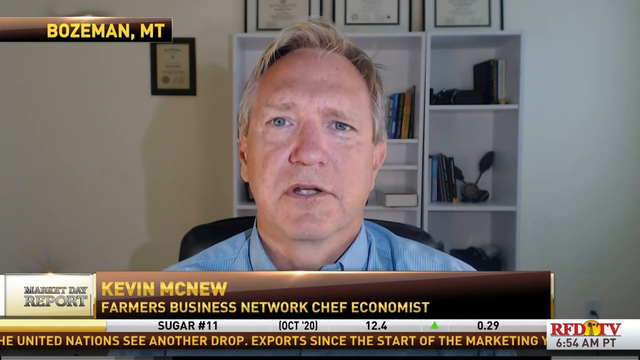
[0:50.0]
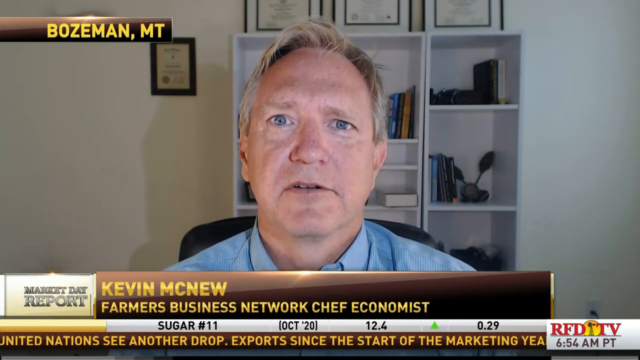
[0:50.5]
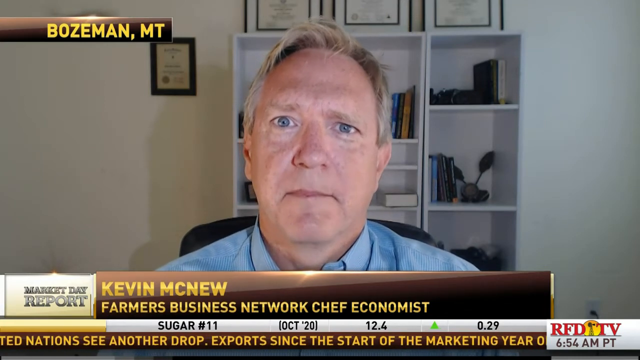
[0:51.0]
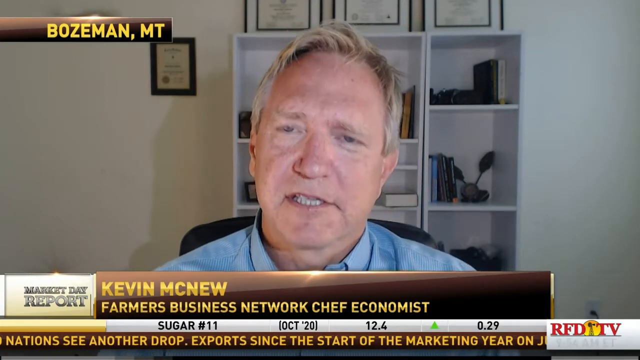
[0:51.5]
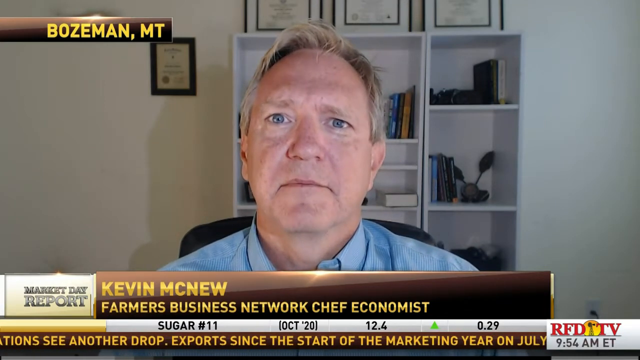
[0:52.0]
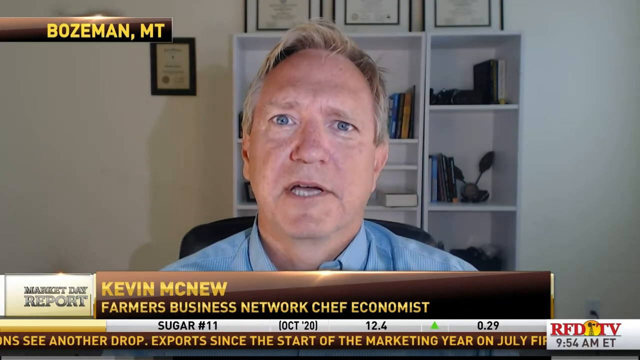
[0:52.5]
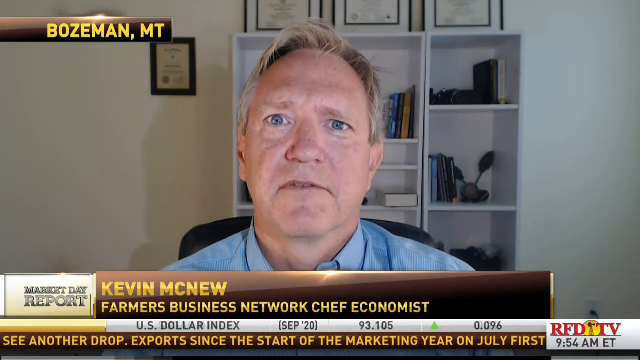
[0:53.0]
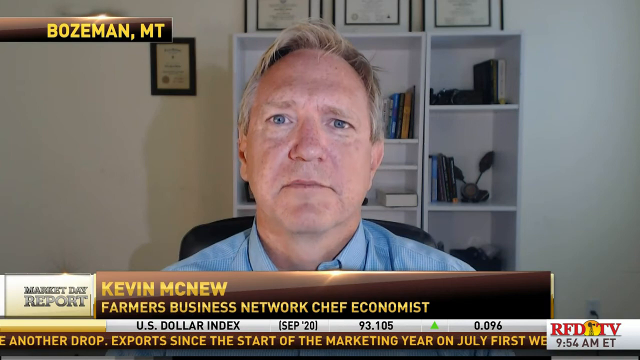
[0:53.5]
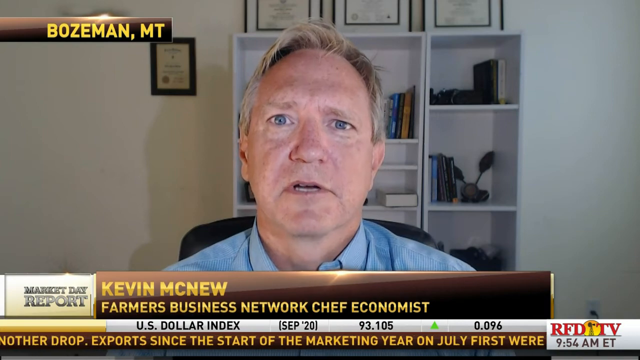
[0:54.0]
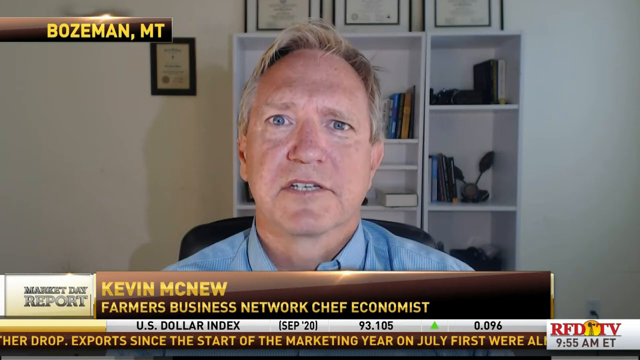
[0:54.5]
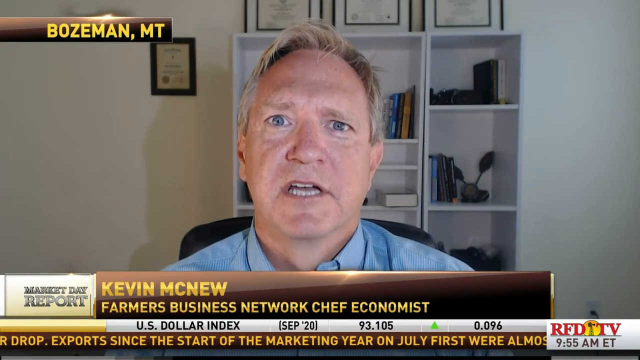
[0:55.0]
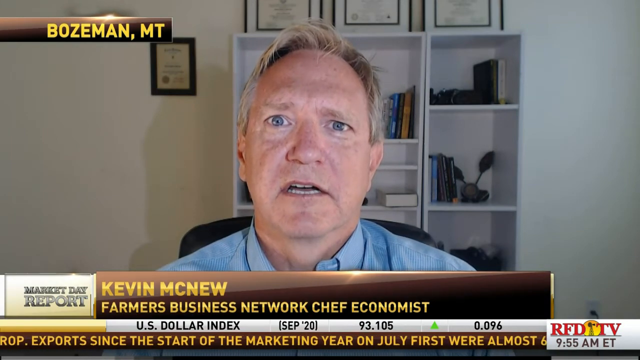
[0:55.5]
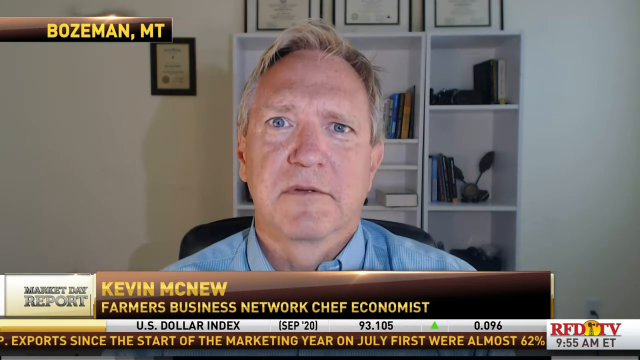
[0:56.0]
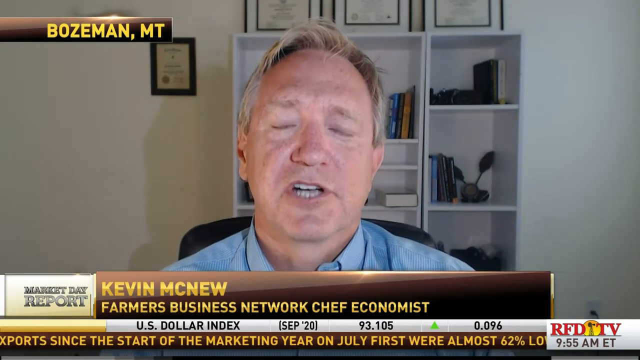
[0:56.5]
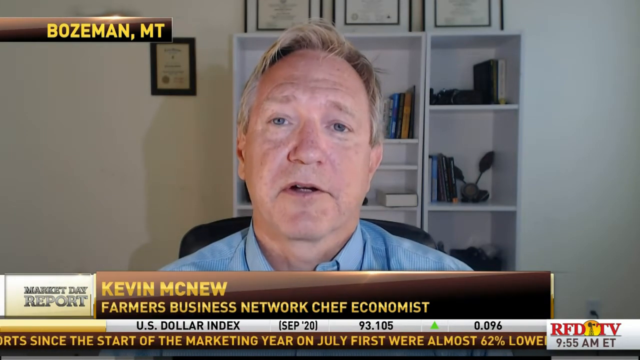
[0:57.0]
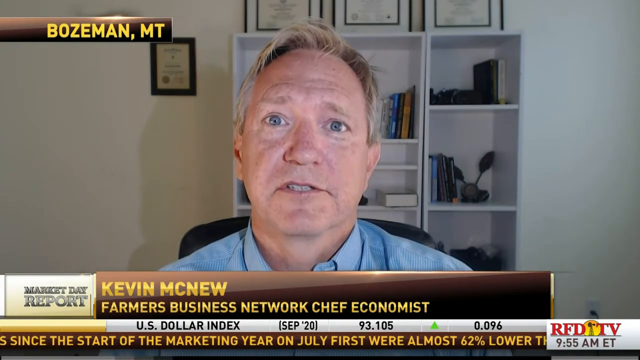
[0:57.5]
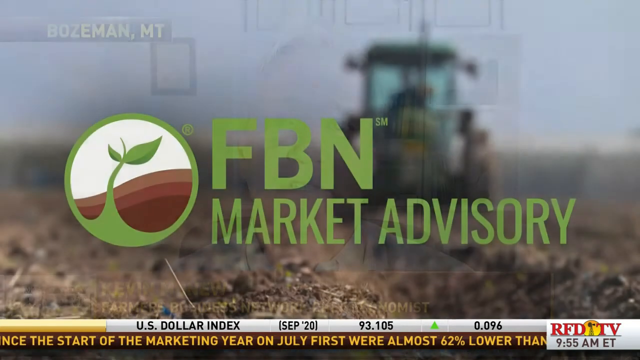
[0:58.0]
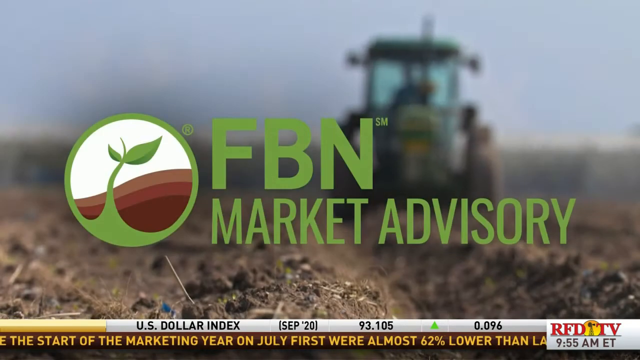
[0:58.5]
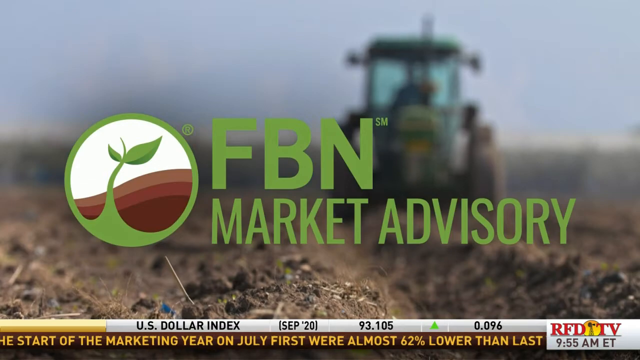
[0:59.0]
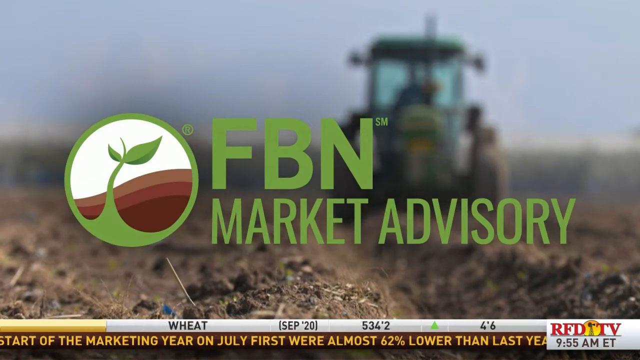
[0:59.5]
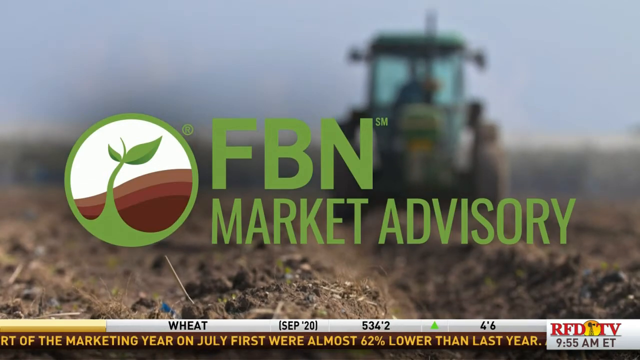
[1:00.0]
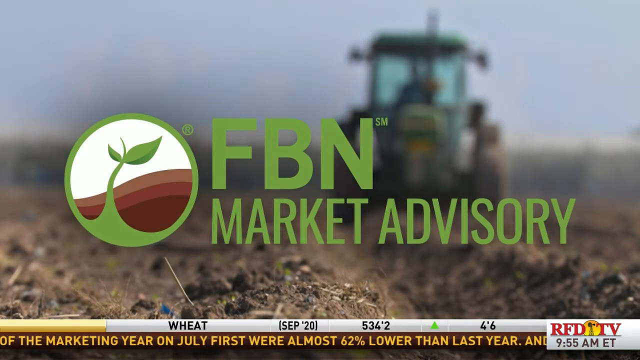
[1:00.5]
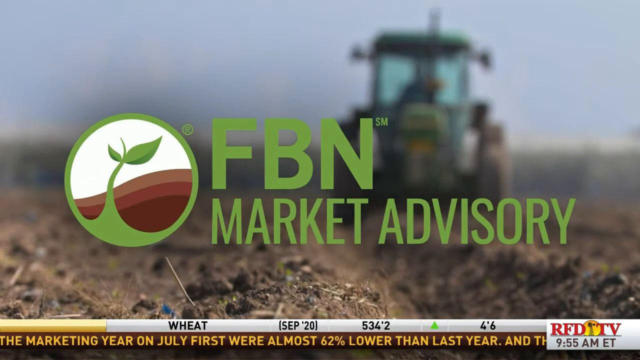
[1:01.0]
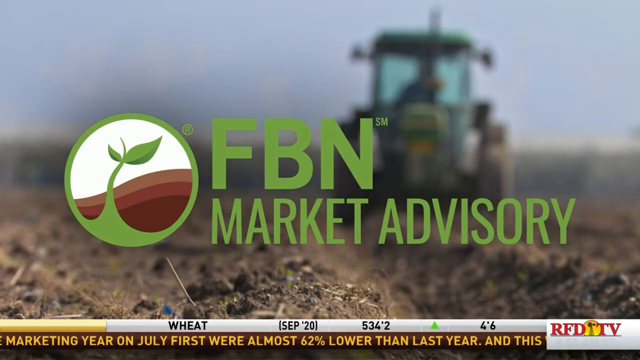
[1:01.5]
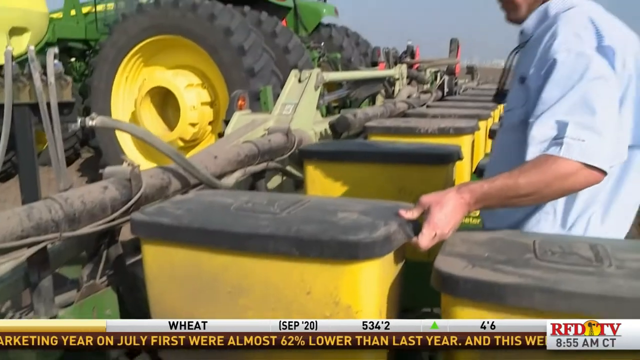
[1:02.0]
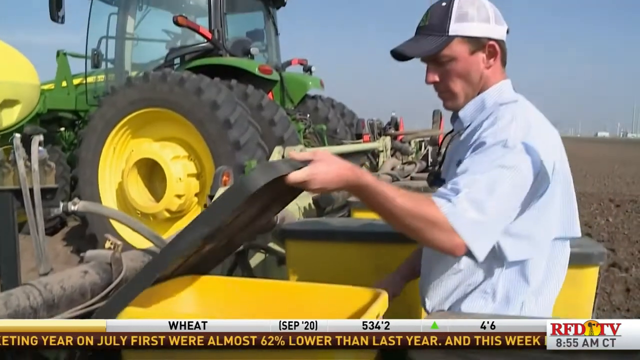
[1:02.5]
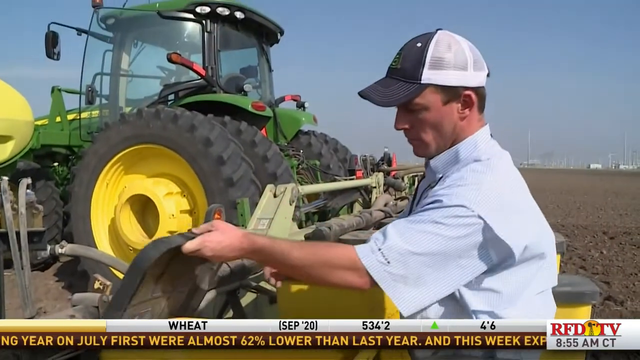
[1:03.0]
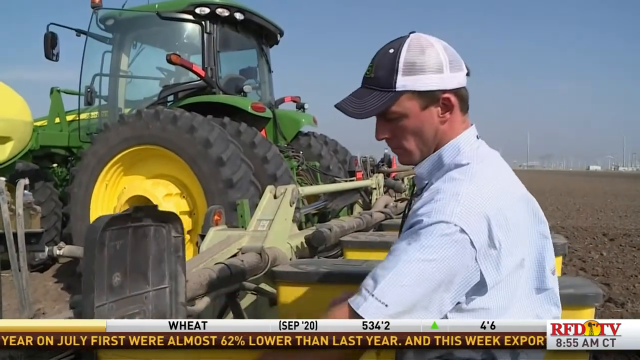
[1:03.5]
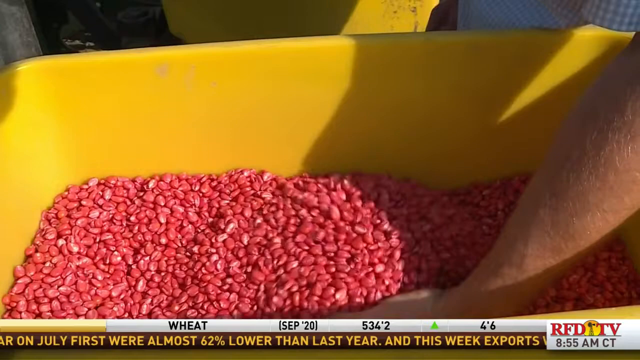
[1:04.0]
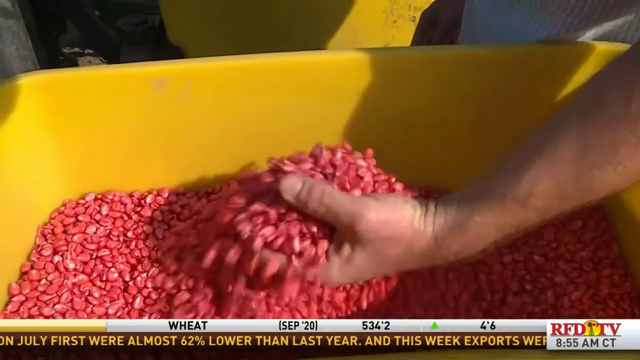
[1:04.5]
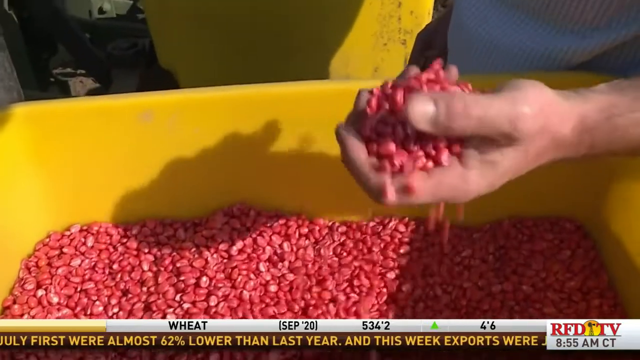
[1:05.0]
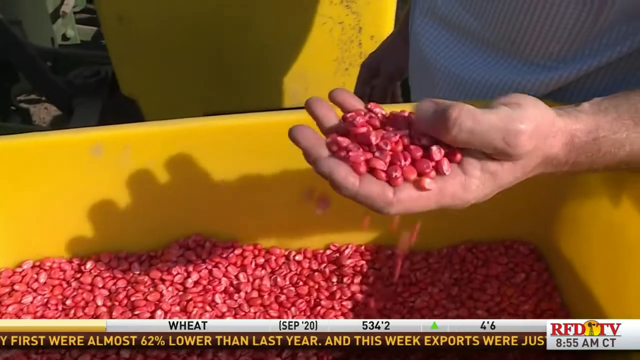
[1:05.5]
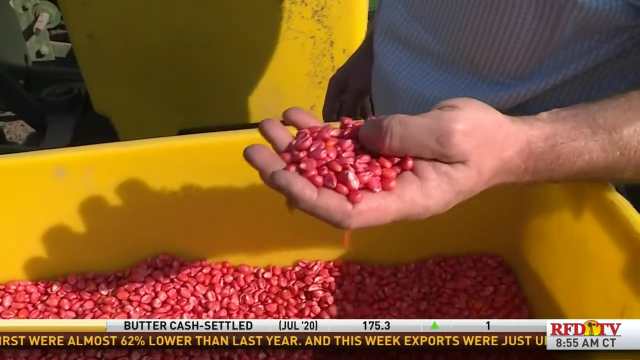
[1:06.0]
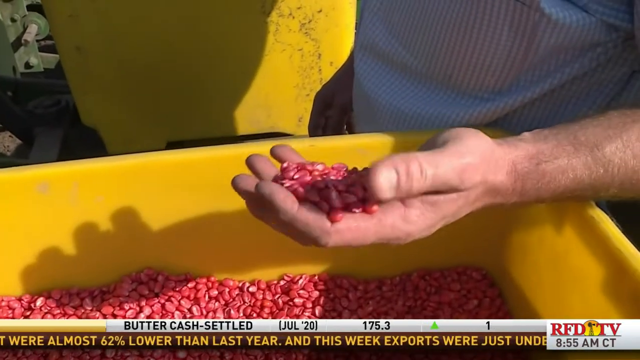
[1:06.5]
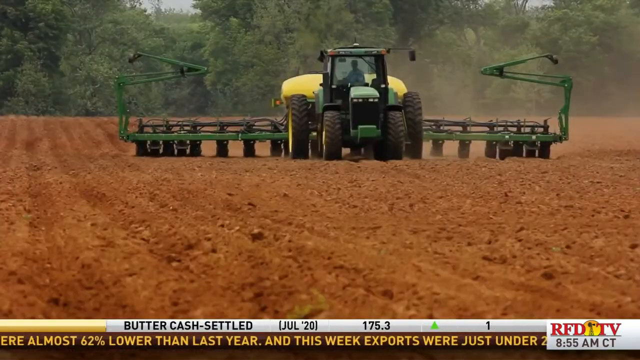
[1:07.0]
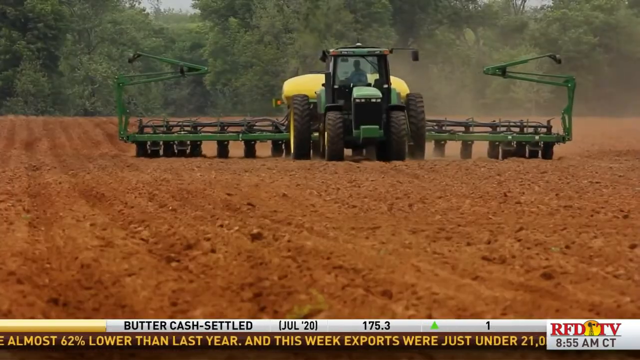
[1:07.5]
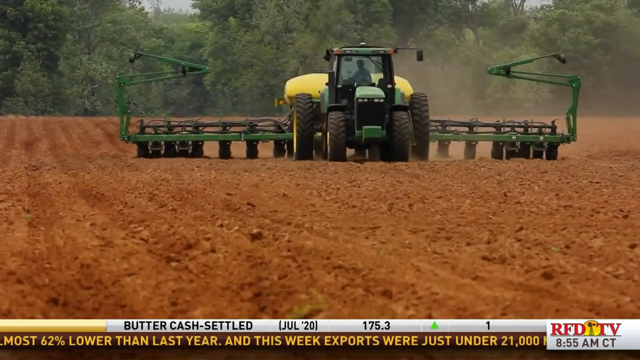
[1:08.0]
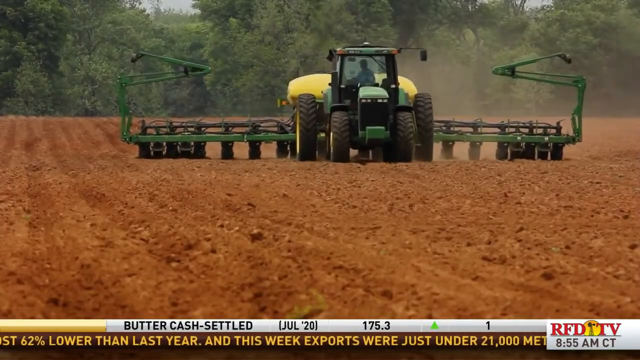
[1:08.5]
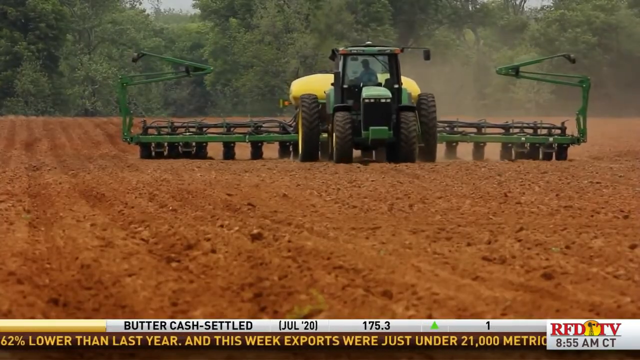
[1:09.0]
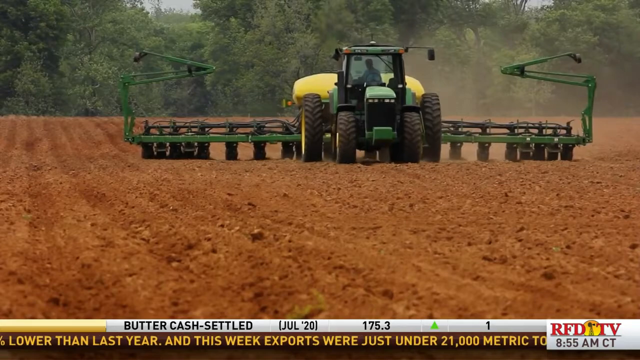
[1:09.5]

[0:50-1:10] Kevin McNeill, identified as Farmers Business Network Chief Economist, reports from Bozeman MT. He is a white man with grey hair in a blue top, sitting on a chair. Behind him is a white shelf holding books, with an award on the wall behind the shelf and three other awards on top of it. FBN market advisory appears, followed by a picture of farmers planting maize with a green tractor that has many forks behind it for planting the maize in the soil.